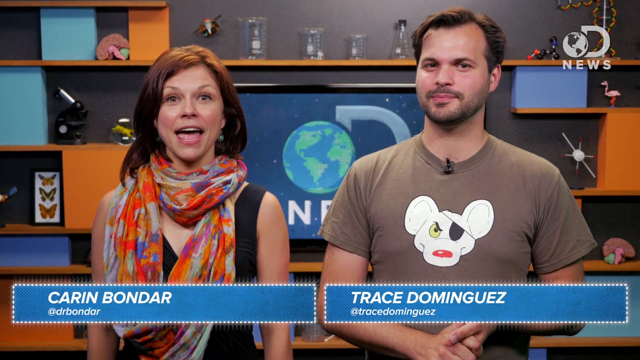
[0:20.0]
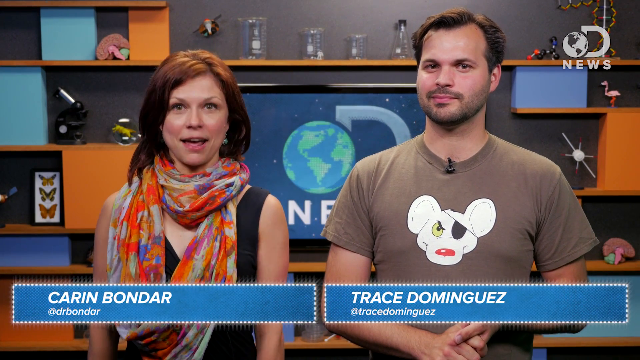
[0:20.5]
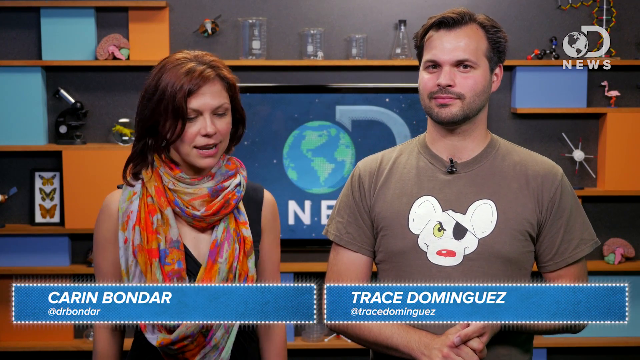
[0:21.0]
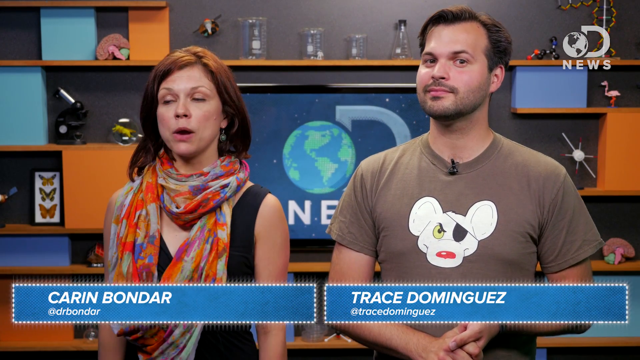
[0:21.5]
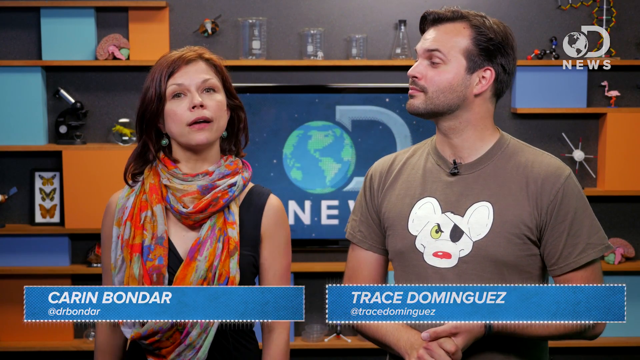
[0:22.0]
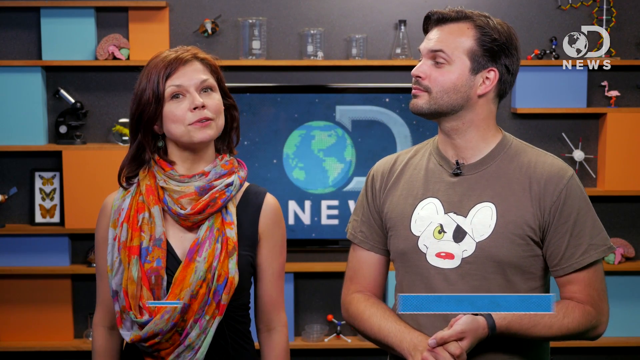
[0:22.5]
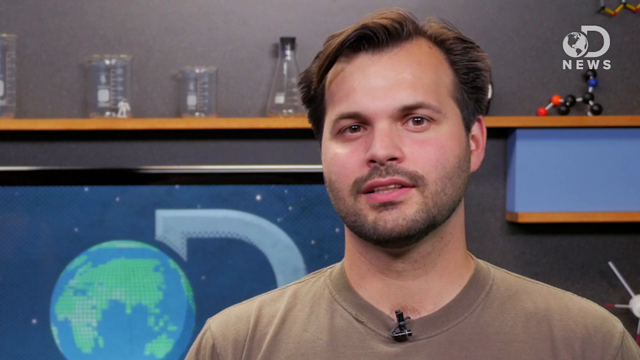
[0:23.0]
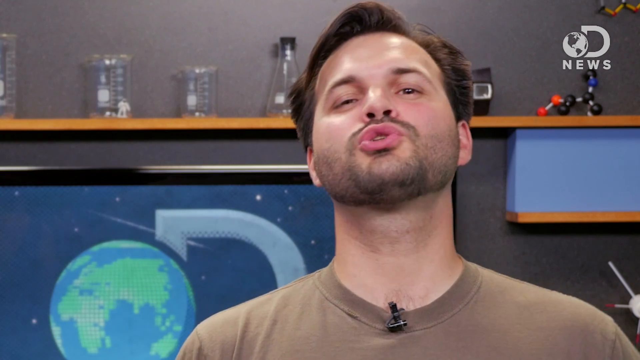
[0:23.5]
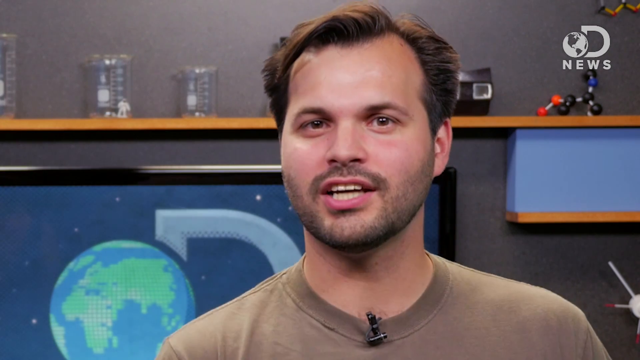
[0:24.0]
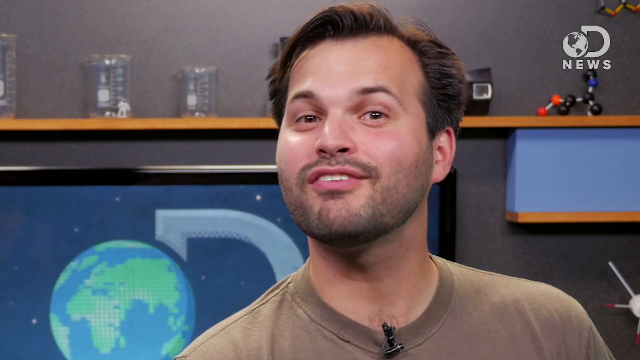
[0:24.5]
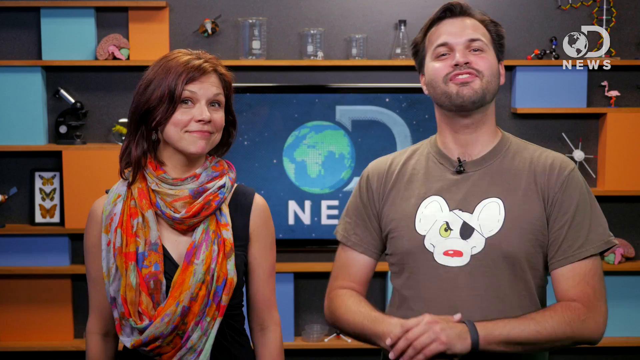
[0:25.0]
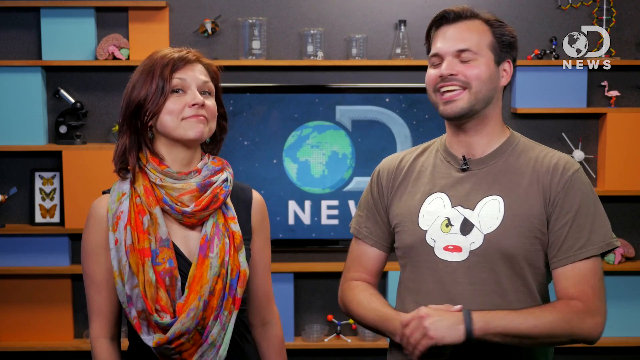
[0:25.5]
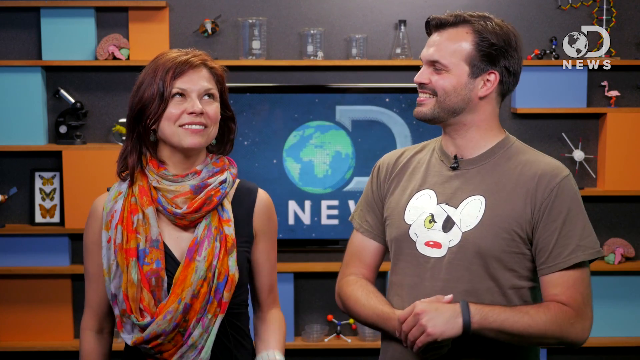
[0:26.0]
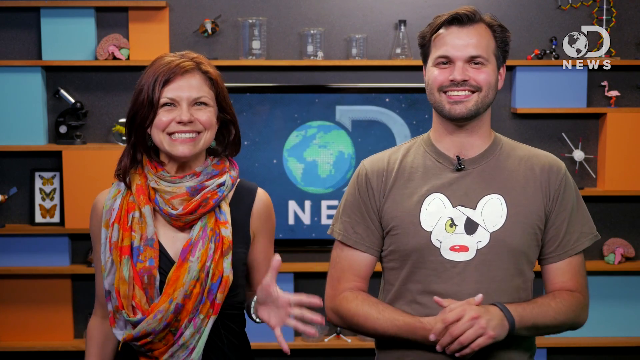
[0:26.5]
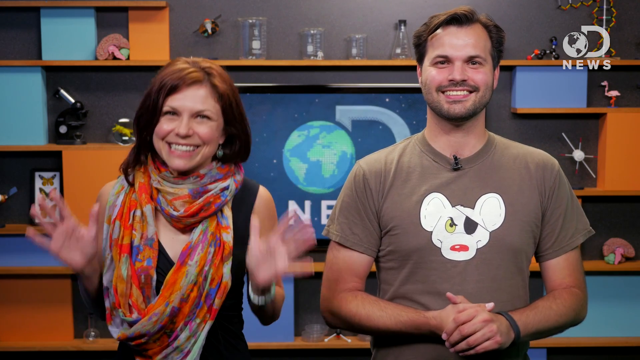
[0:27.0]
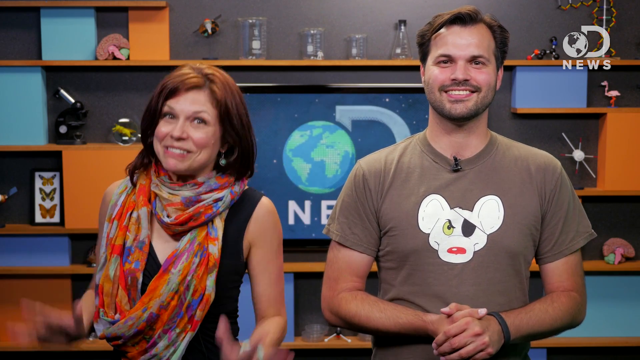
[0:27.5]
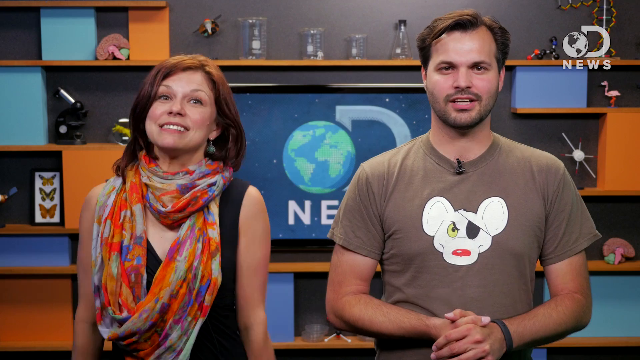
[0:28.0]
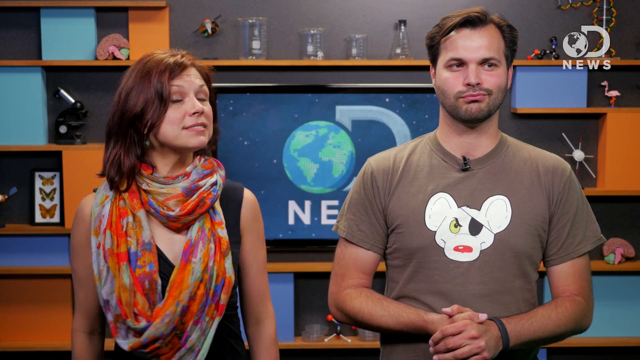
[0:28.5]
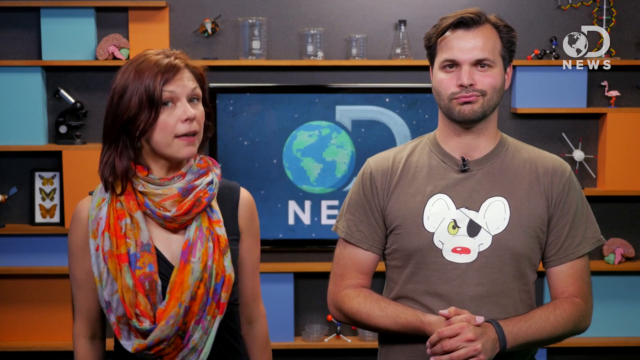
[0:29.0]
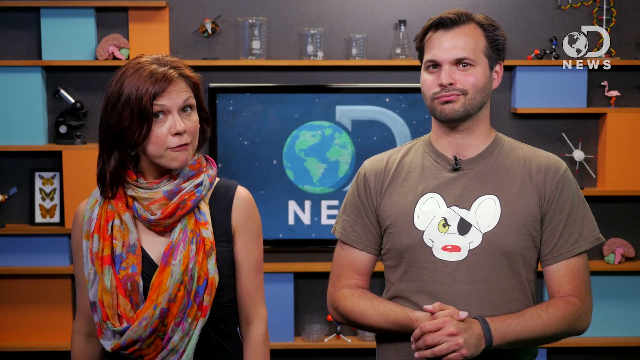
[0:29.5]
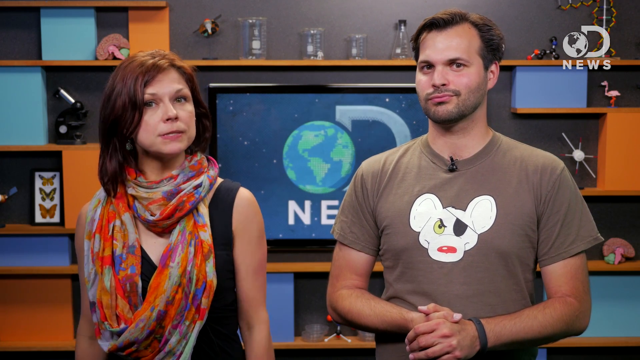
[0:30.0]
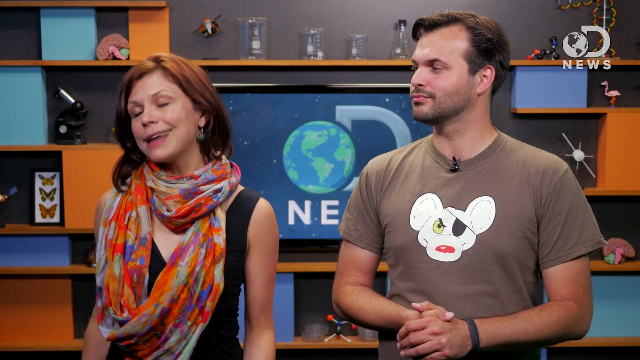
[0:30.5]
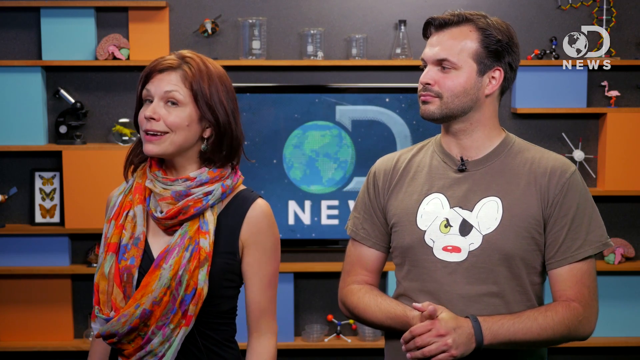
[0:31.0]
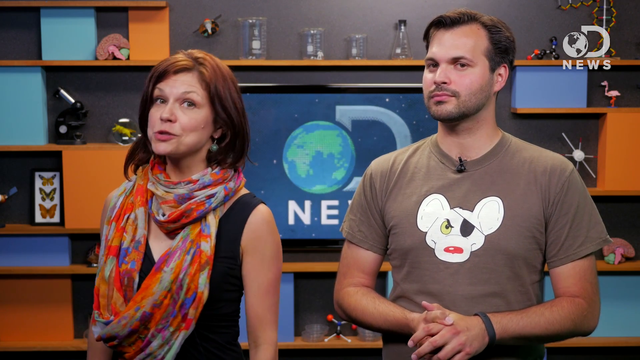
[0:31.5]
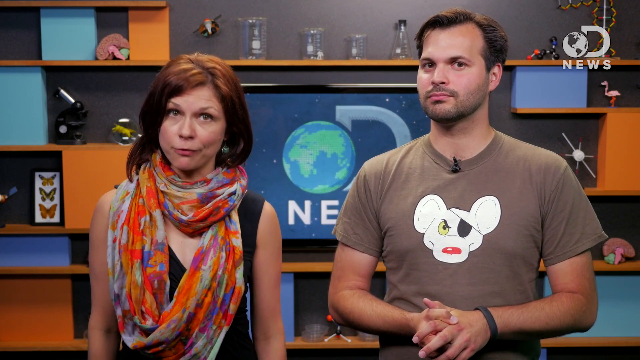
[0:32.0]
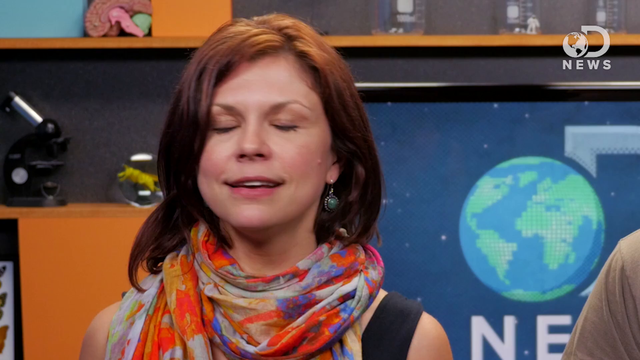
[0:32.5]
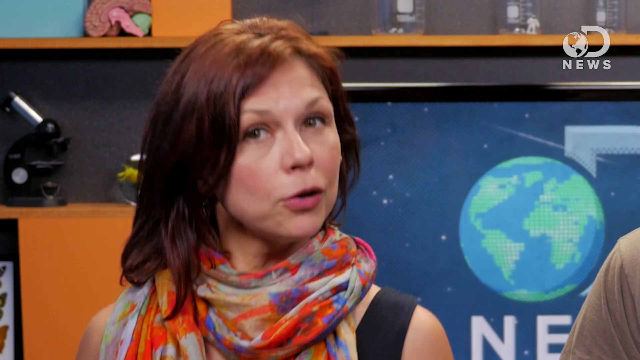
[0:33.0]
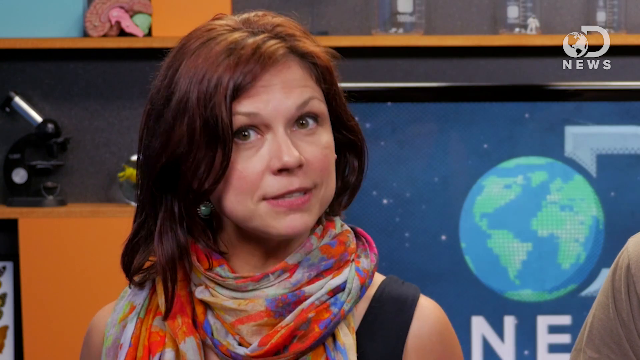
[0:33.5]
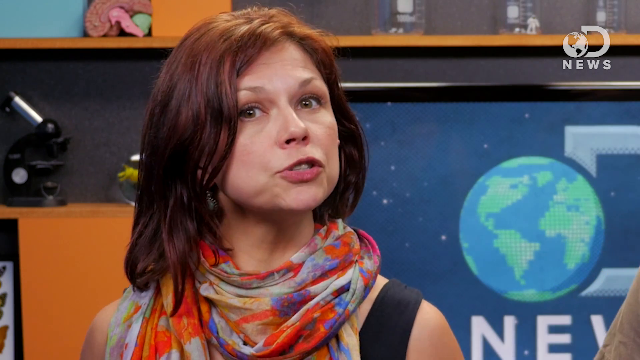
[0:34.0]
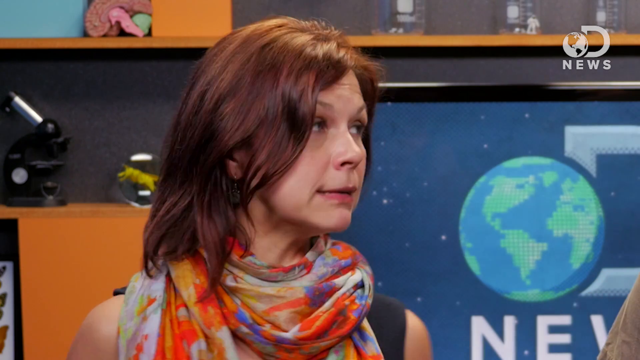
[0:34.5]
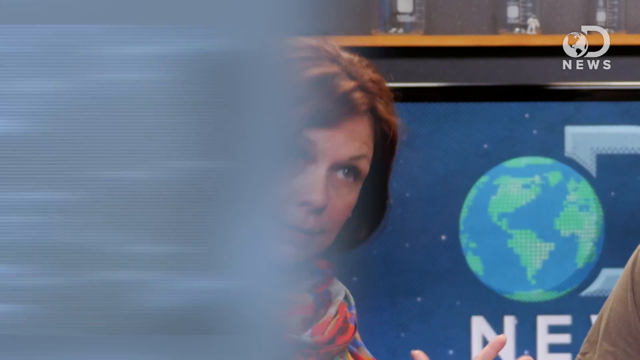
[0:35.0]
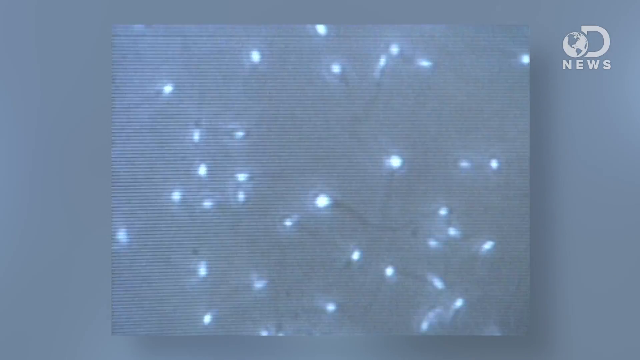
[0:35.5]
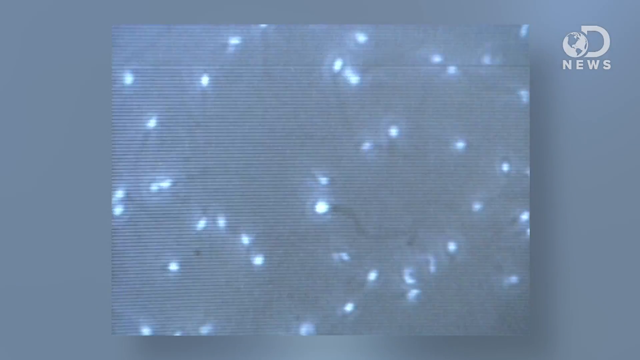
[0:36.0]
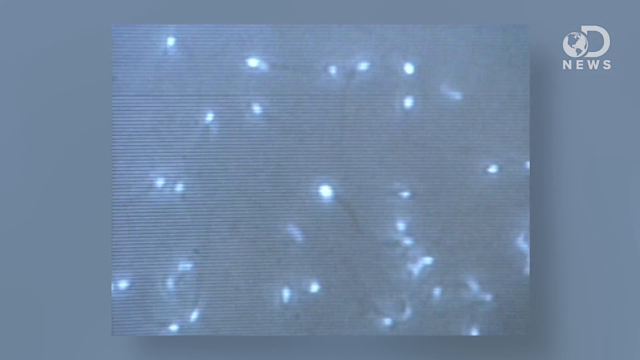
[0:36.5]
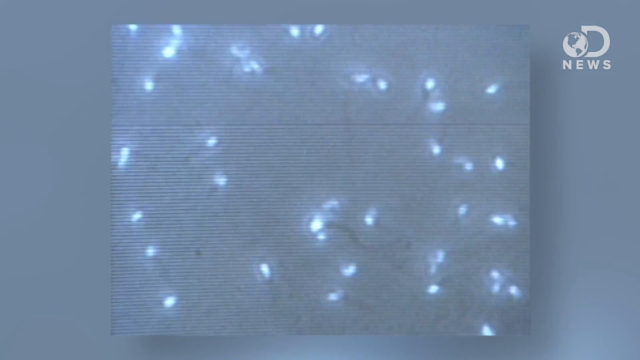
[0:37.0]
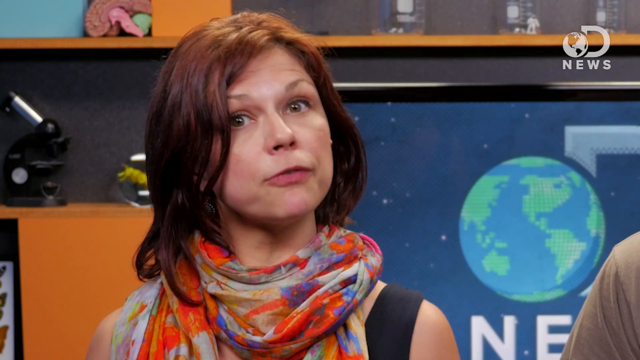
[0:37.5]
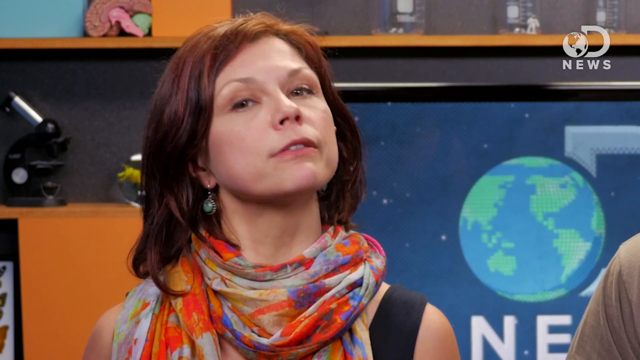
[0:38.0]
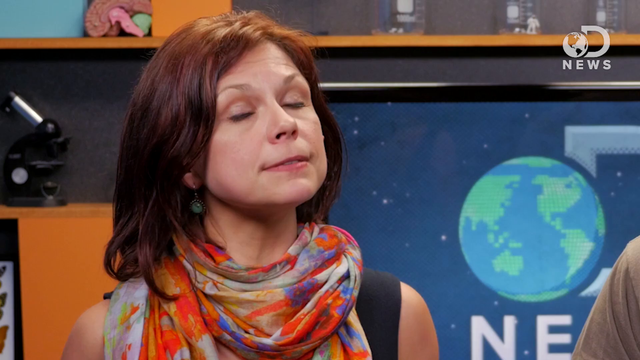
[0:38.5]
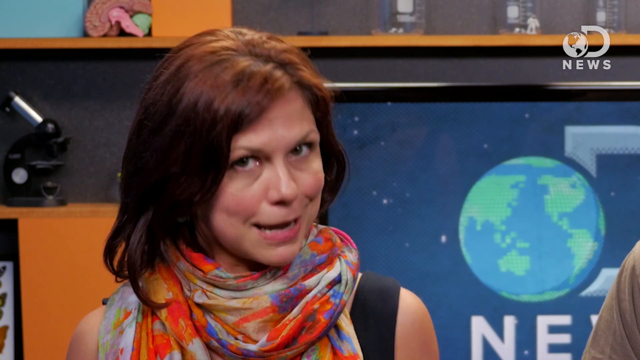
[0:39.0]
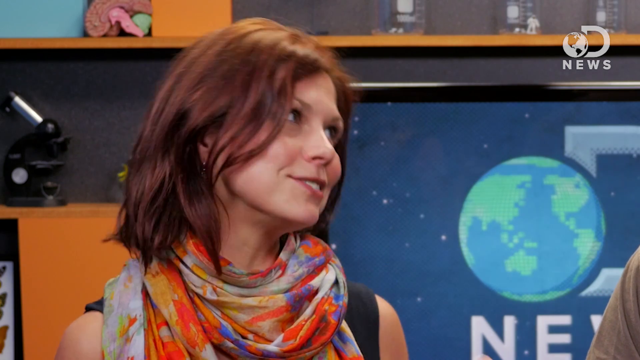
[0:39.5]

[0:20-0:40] Caren Bondar and Trace Dominicas are on screen. Trace wears a grayish green T-shirt with a white mouse on it that has a red nose and a patch over its eye. Caren wears an orange scarf with paint on it in black, blues and reds. The background shows the DNews logo with the Earth and stars in blue and green; the "news" part is in white. The set looks like a science lab, with flasks on a shelf in front of a gray wall and touches of orange. A microscope is to the left, and butterflies are to the left on something with a white border. There are orange and blue colors. As they talk, the focus moves to the man and then back to both of them. They smile a lot and move a lot; it is not typical news but almost comedic science news. Then a computer graphic appears of white stars or things that almost look like sperm, possibly something seen under a microscope. The lady with brownish red hair is speaking. Their names appear in white lettering against a blue background.